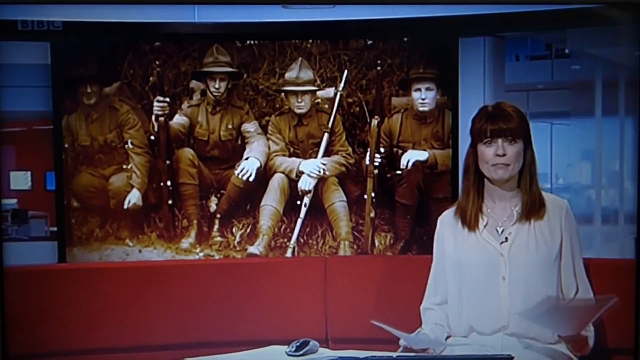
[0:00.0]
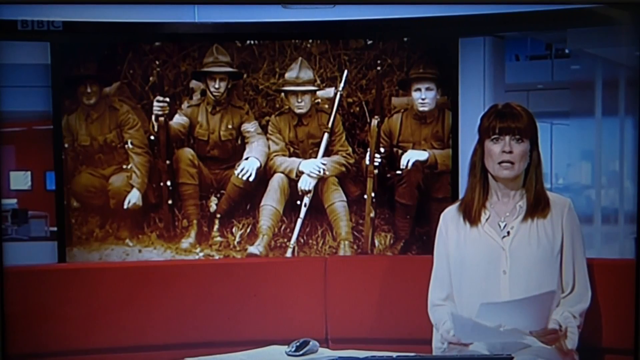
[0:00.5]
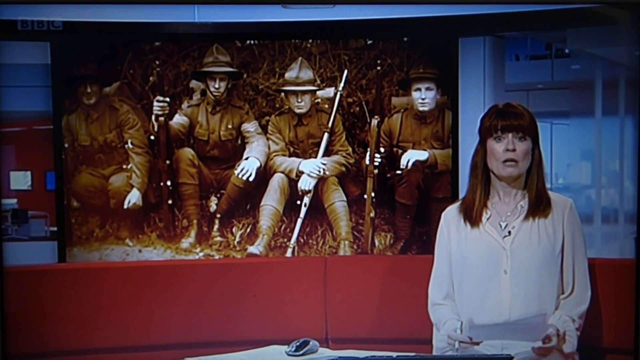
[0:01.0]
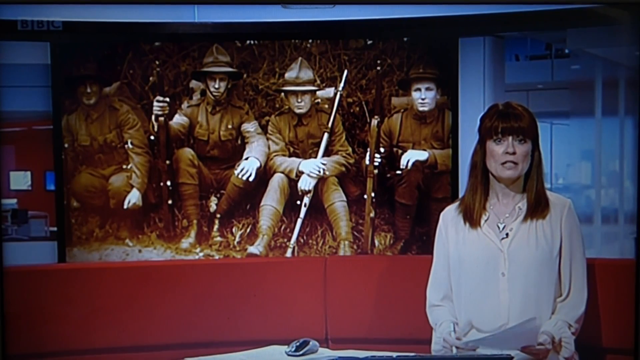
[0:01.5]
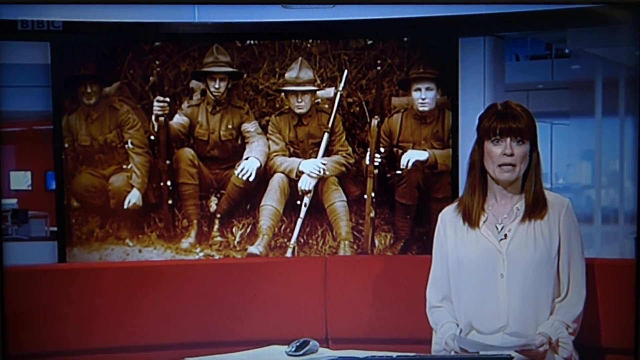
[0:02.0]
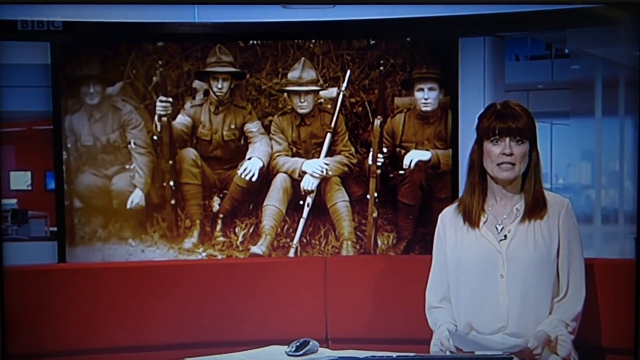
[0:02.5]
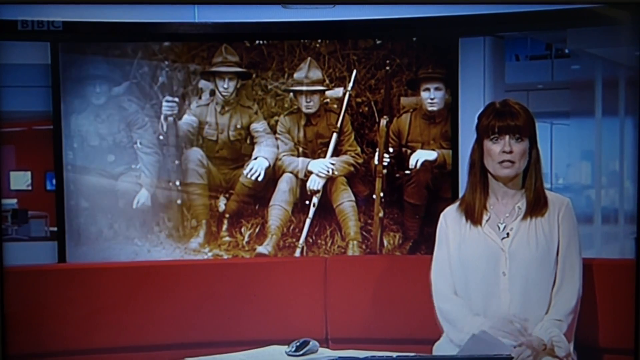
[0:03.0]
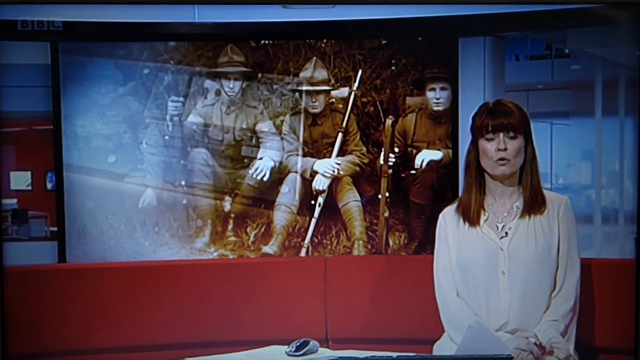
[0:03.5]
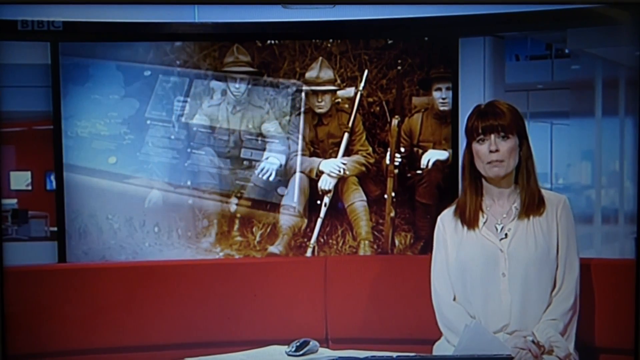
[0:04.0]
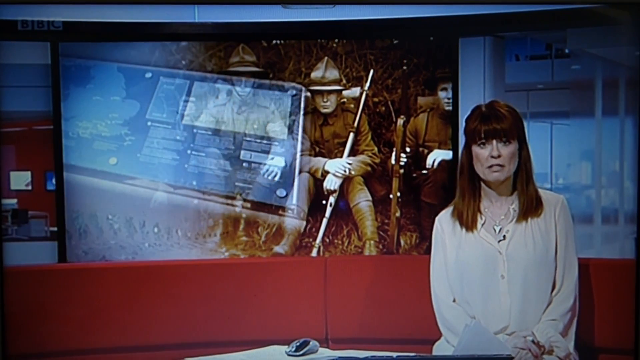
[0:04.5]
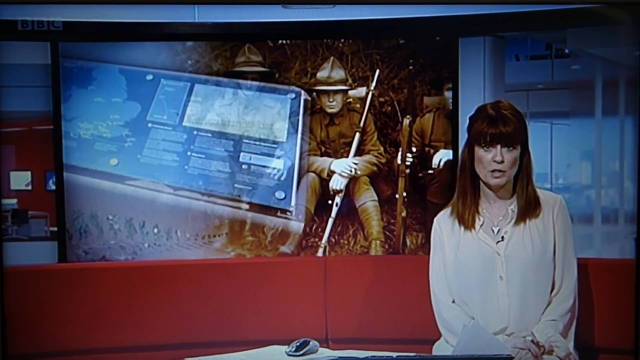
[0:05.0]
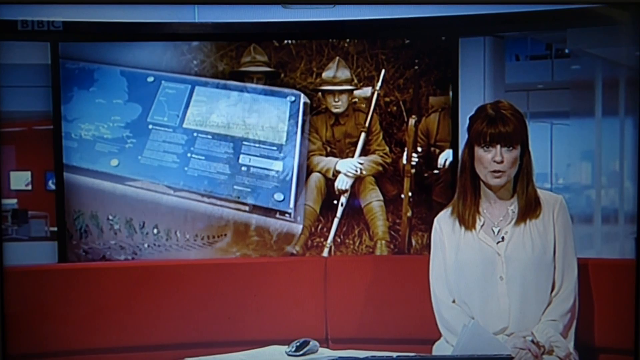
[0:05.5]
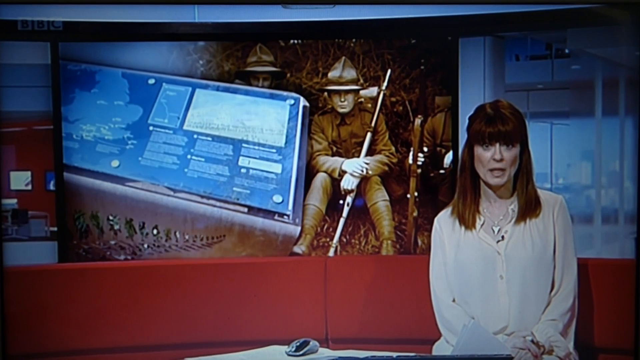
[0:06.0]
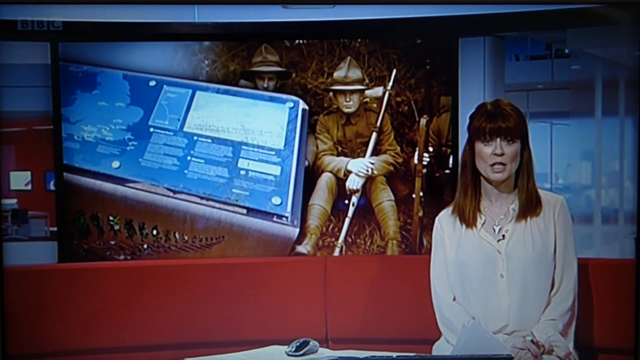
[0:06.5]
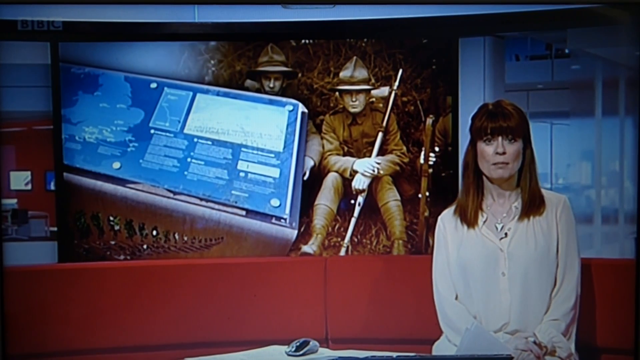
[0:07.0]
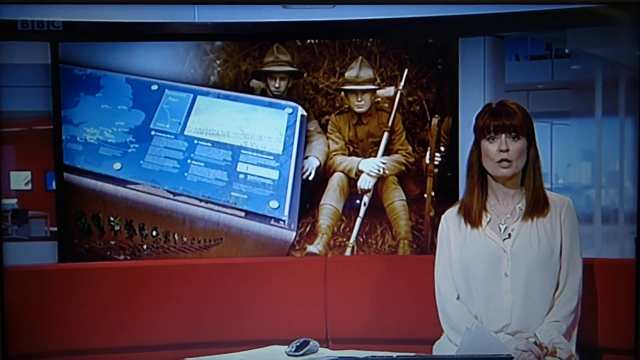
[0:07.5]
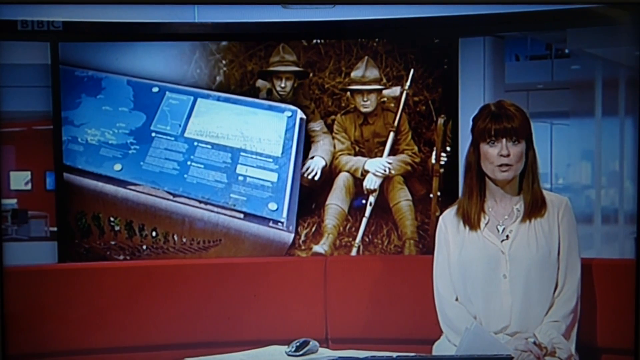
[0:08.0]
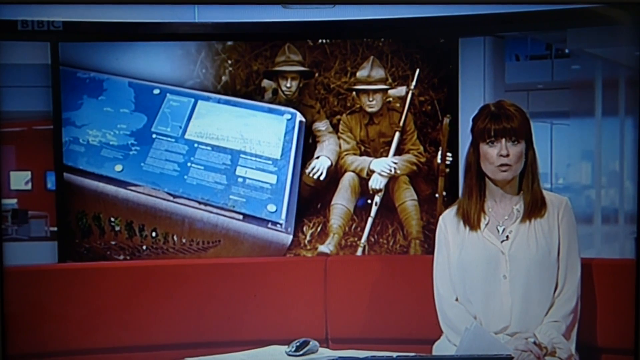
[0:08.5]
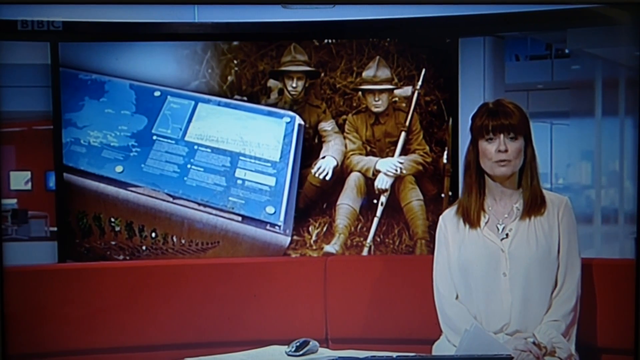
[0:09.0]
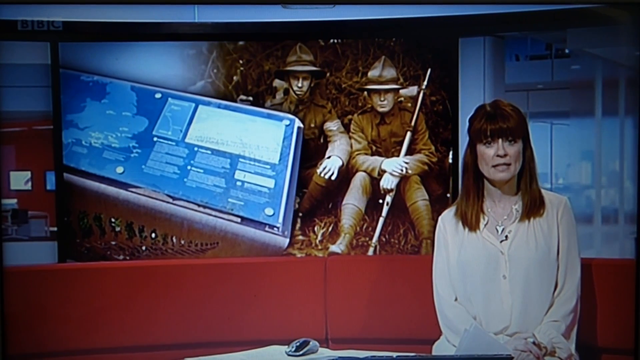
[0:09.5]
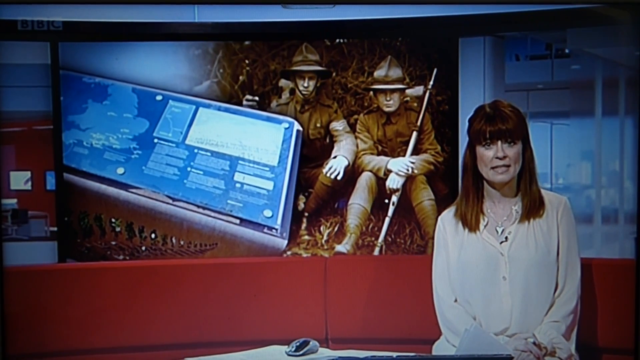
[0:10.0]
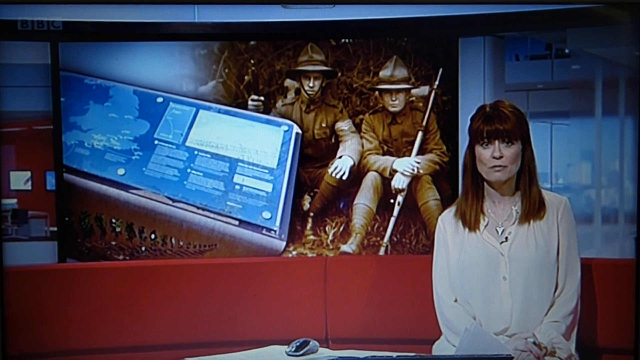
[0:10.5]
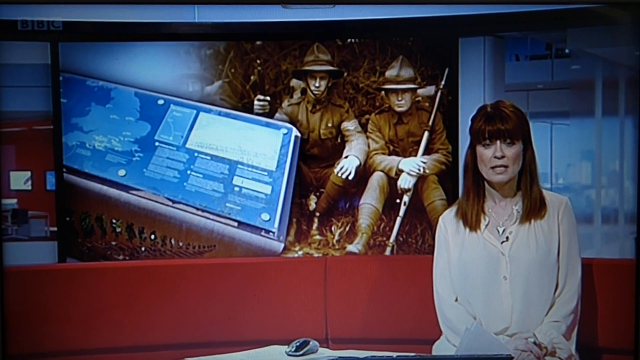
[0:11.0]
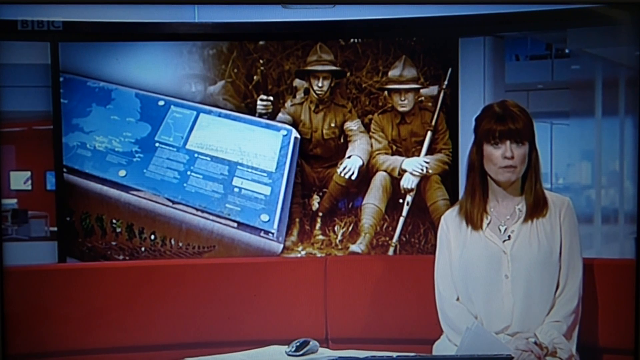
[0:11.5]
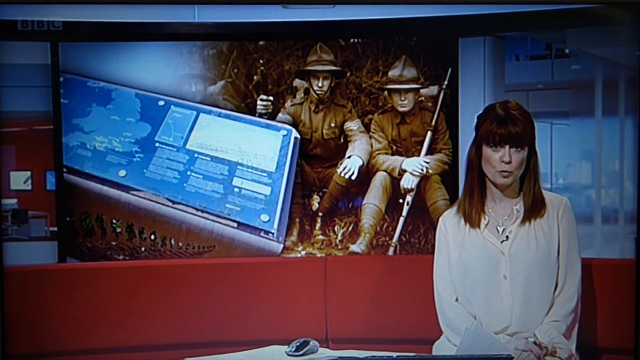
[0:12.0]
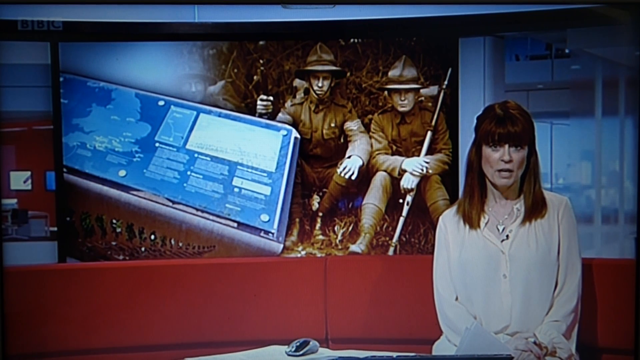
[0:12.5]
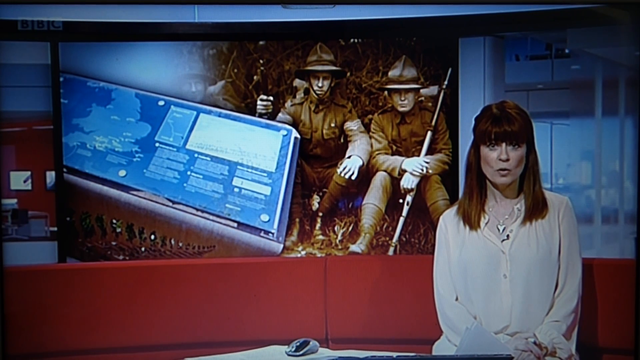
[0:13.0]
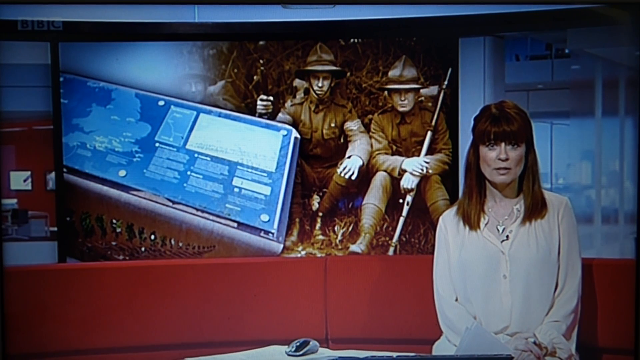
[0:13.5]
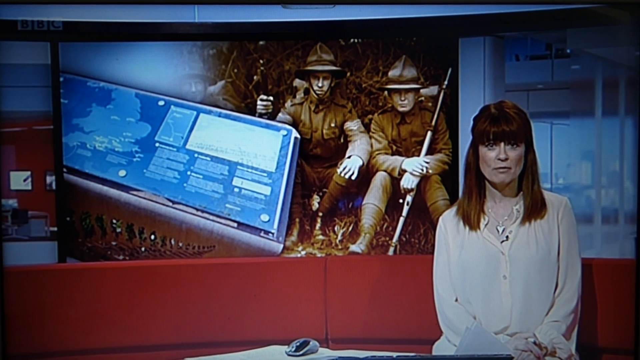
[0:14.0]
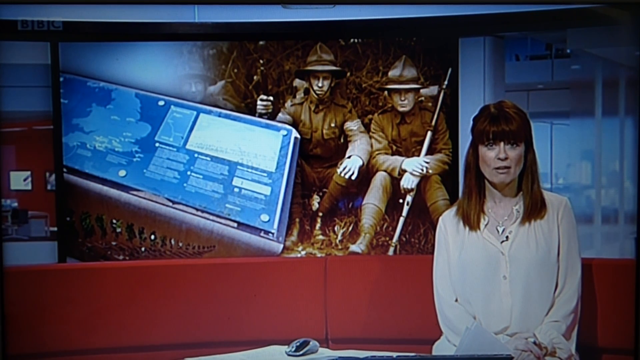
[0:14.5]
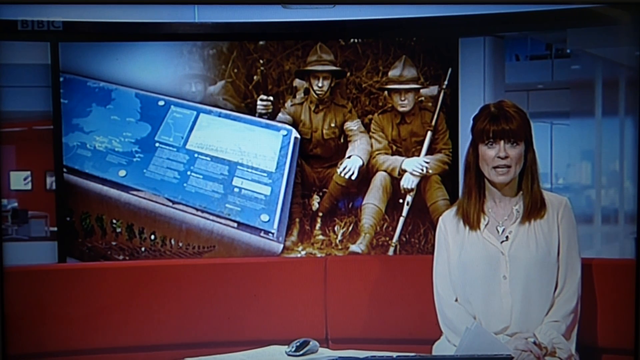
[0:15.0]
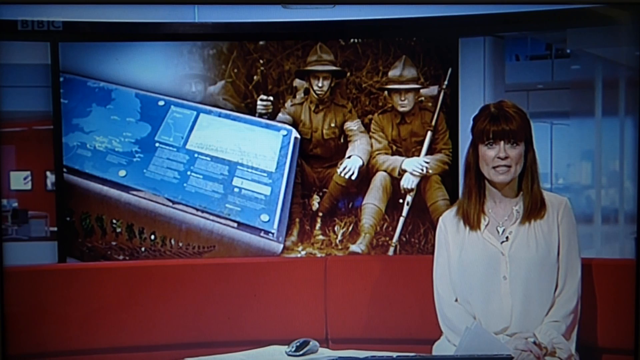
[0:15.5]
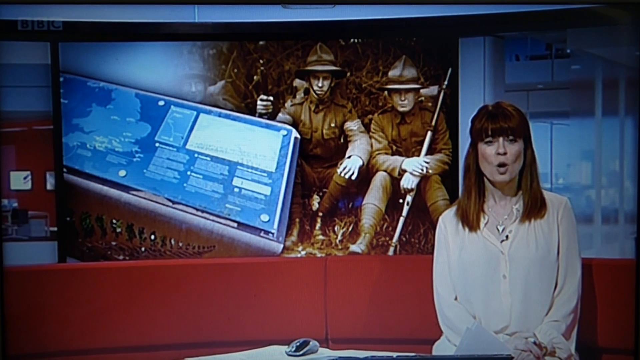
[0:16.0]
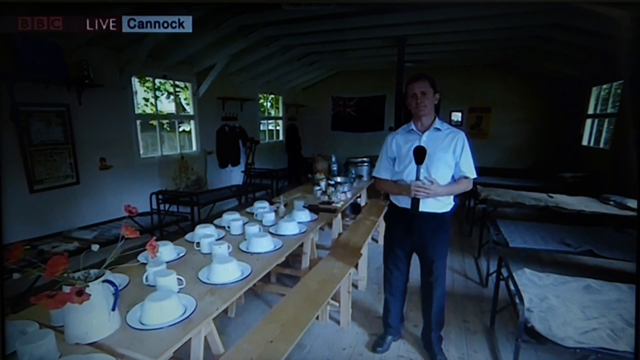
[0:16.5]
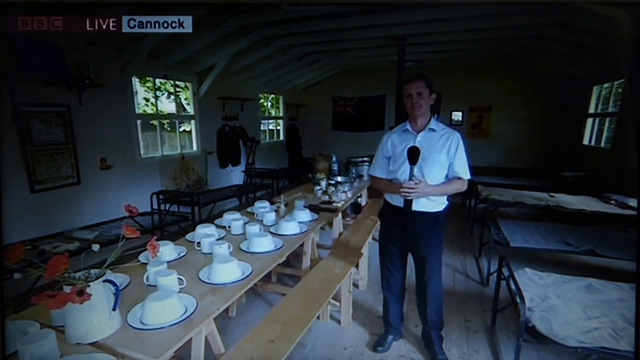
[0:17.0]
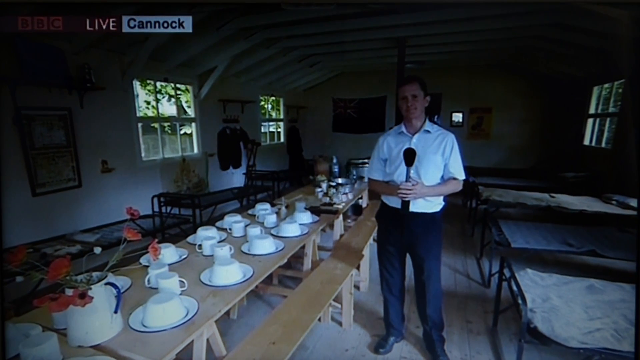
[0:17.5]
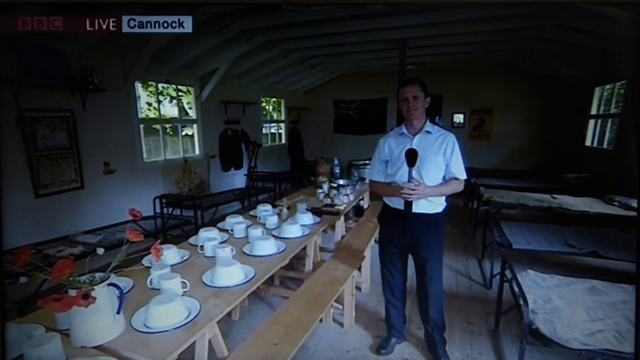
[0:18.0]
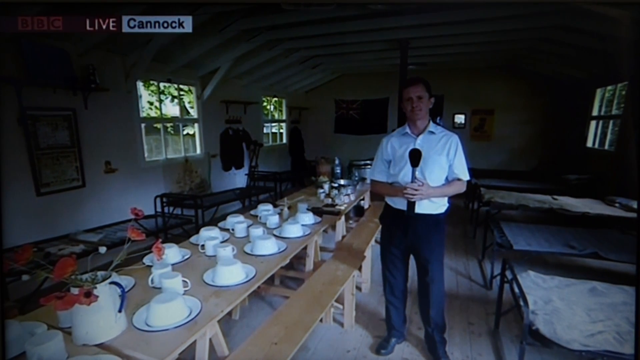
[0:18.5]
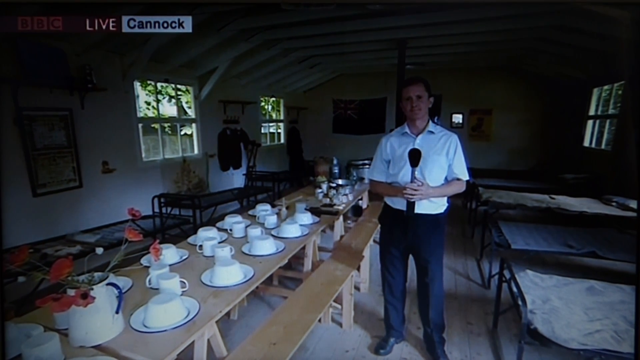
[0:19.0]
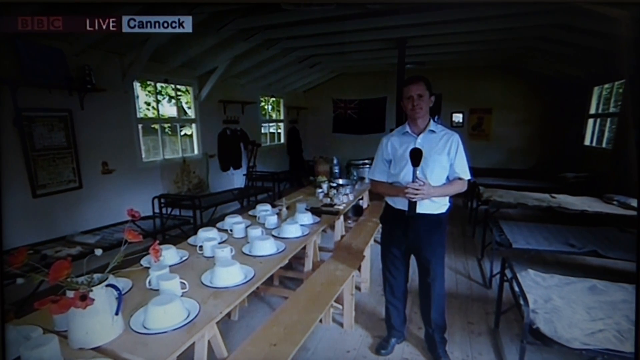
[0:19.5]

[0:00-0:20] A woman is in a studio. She is light-skinned, has long brown hair that touches her shoulders, and wears a long white blouse with a silver necklace that has a silver heart. Behind her, the studio has a rich couch, white walls and red ones. A TV screen shows a vintage black-and-white photograph of four military soldiers, possibly from the 80s or early 1900s. The soldiers wear hats, are armed with weapons, and are sitting near a tree.